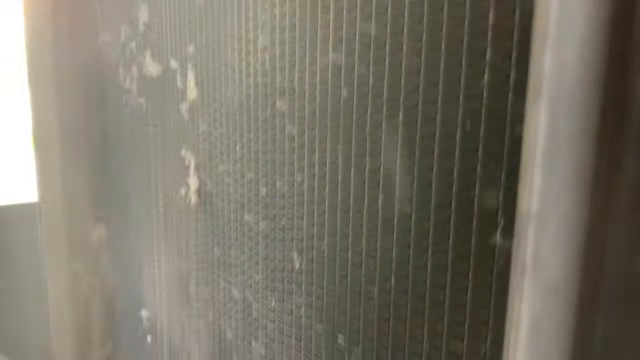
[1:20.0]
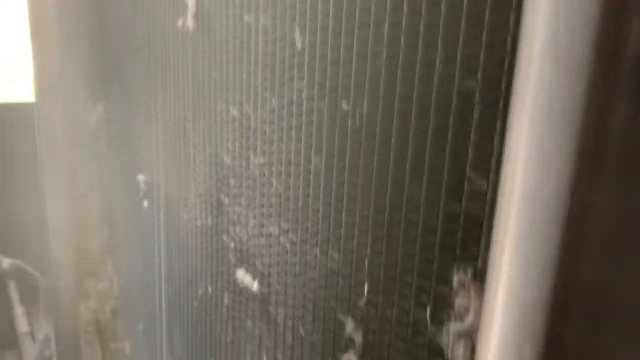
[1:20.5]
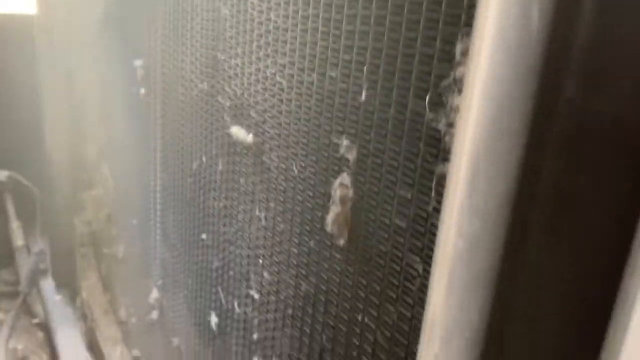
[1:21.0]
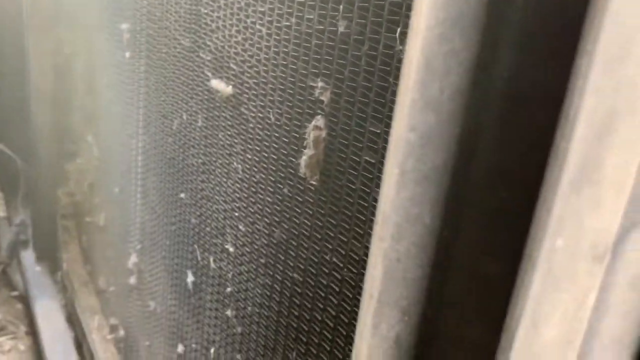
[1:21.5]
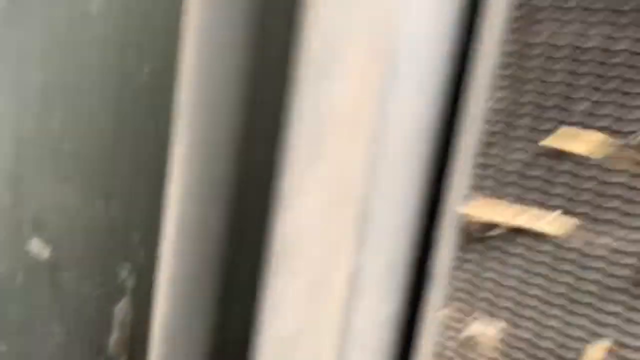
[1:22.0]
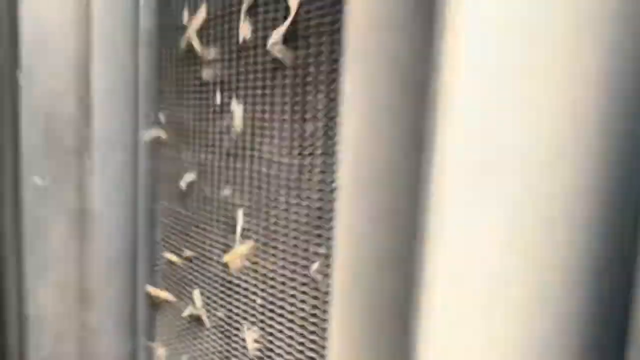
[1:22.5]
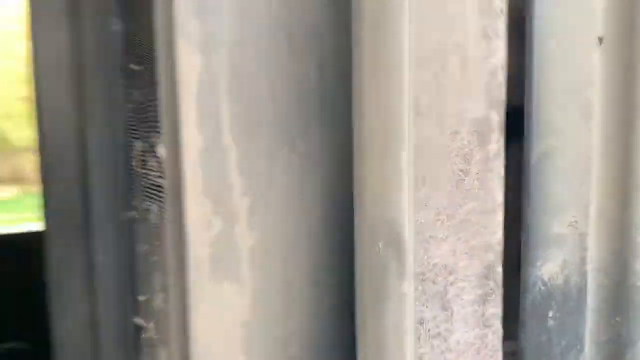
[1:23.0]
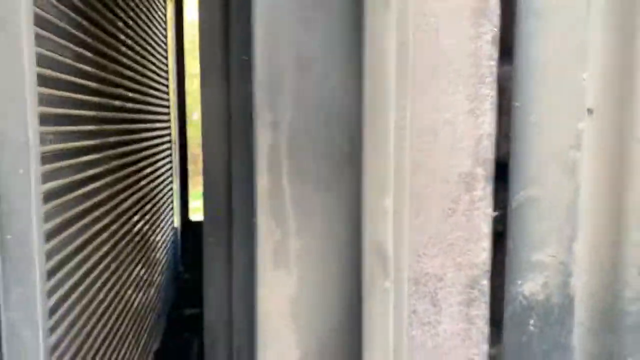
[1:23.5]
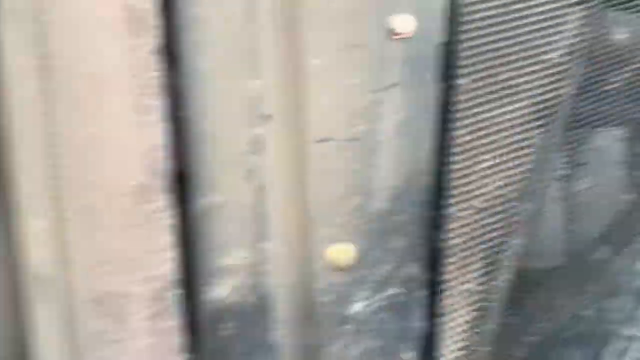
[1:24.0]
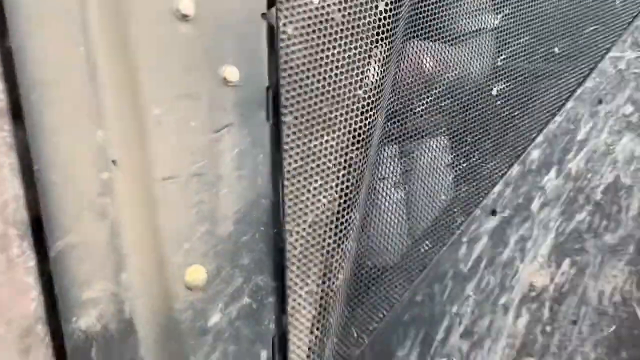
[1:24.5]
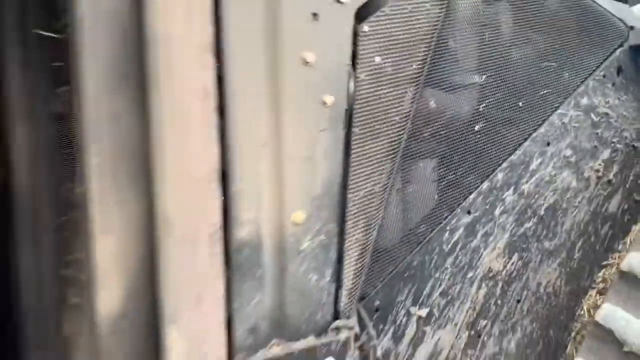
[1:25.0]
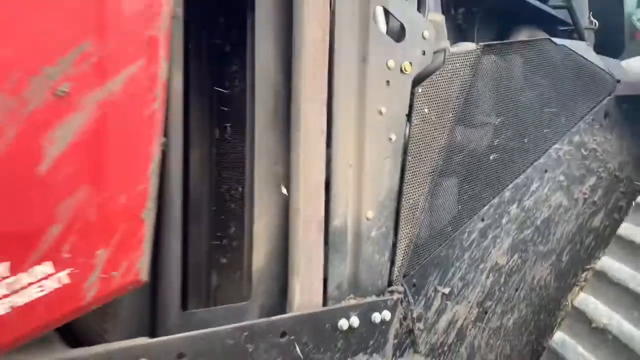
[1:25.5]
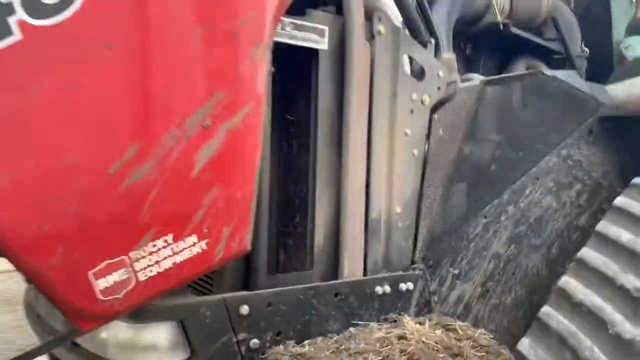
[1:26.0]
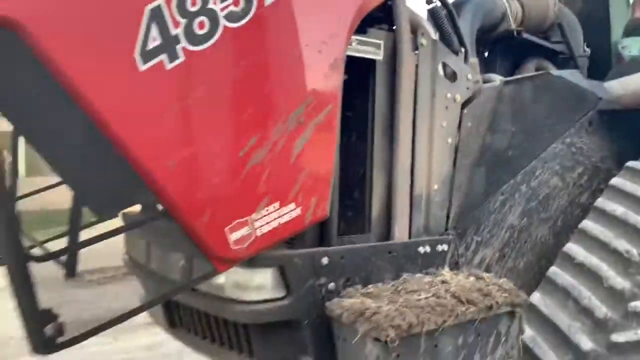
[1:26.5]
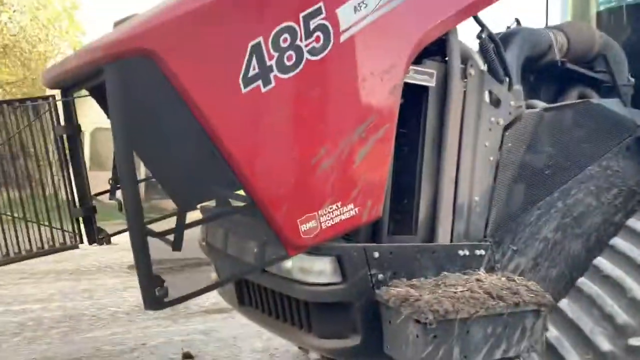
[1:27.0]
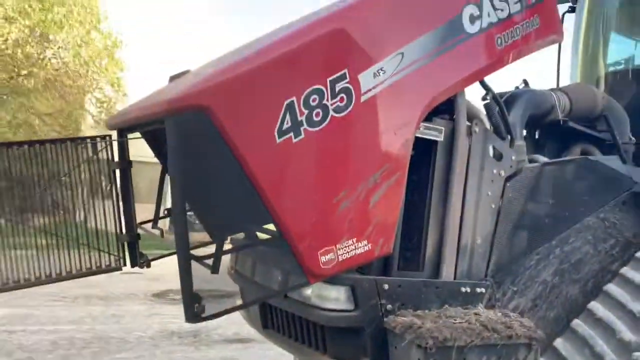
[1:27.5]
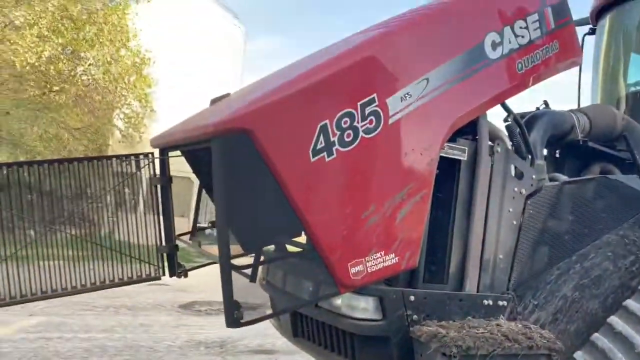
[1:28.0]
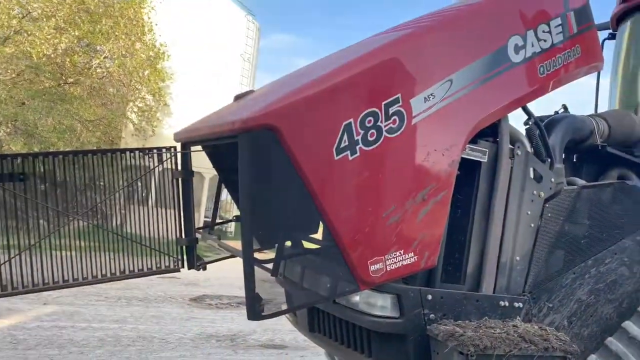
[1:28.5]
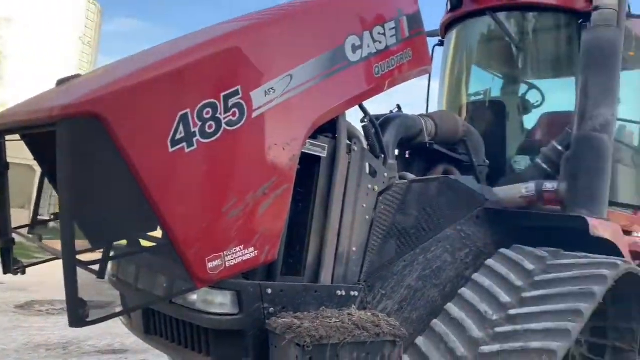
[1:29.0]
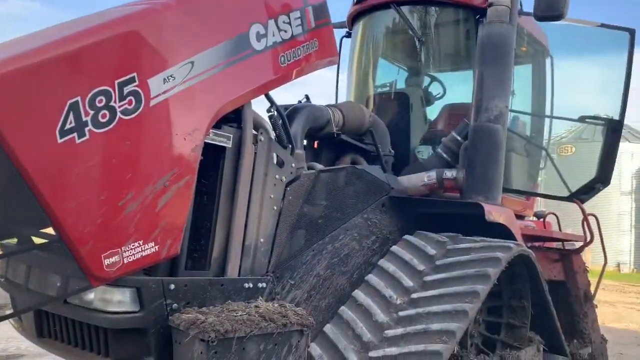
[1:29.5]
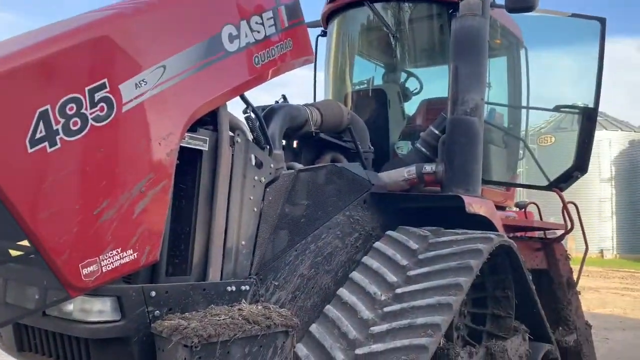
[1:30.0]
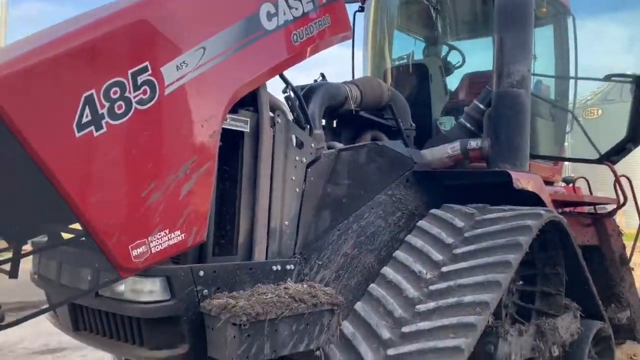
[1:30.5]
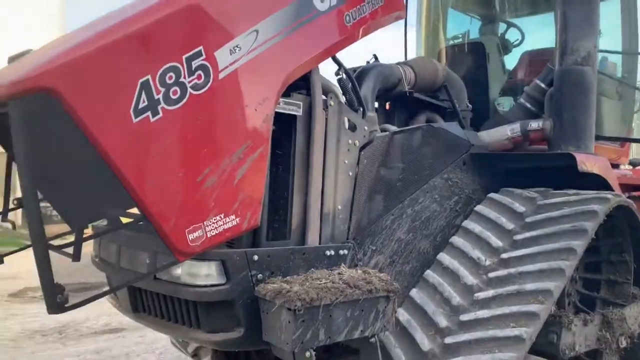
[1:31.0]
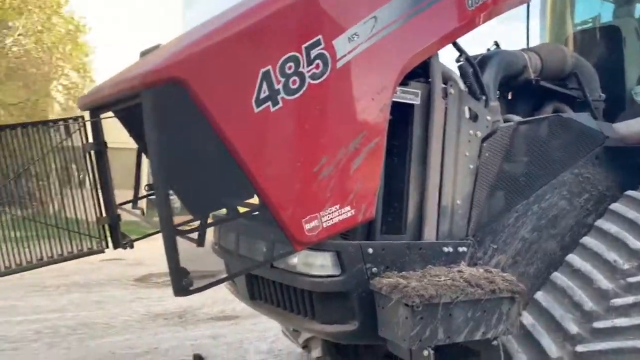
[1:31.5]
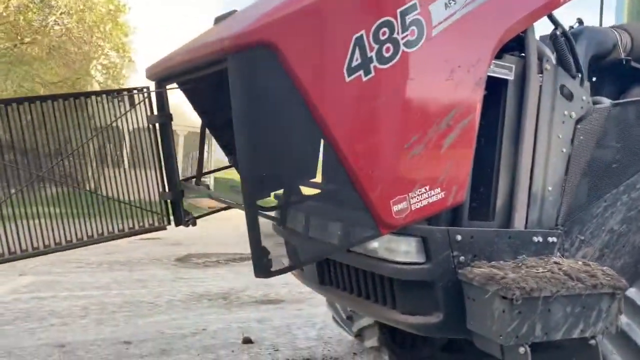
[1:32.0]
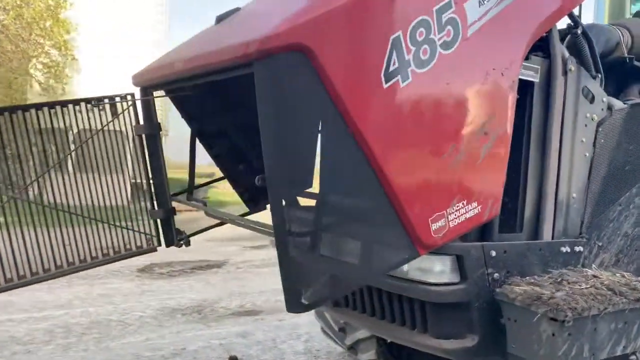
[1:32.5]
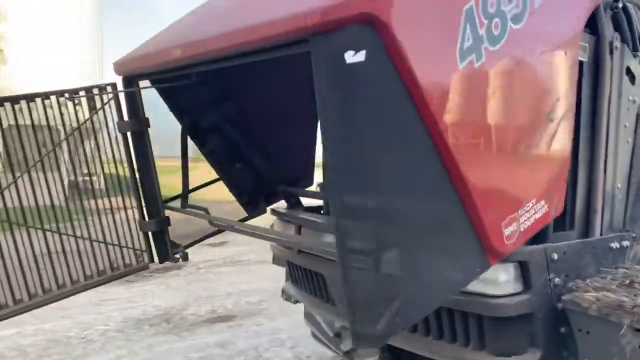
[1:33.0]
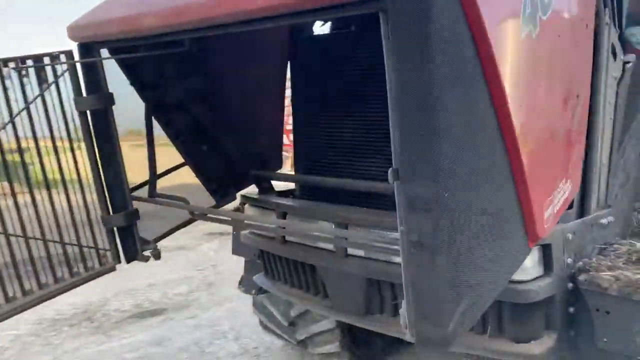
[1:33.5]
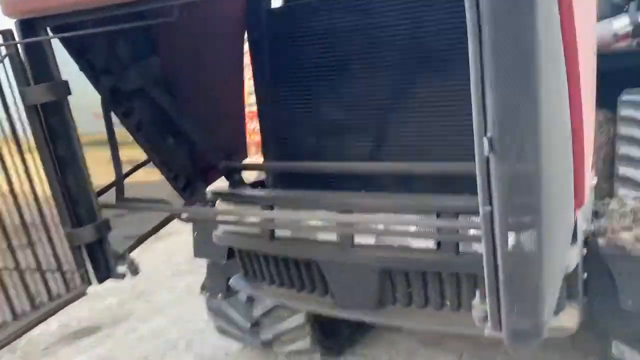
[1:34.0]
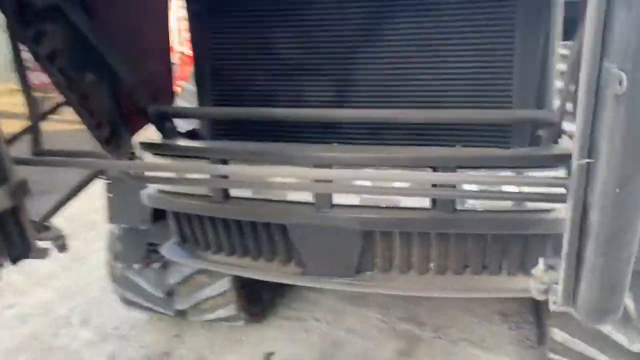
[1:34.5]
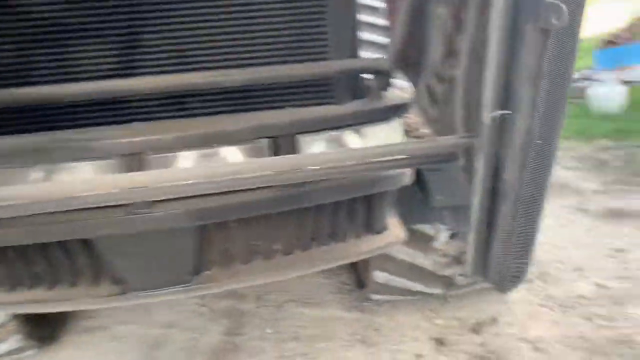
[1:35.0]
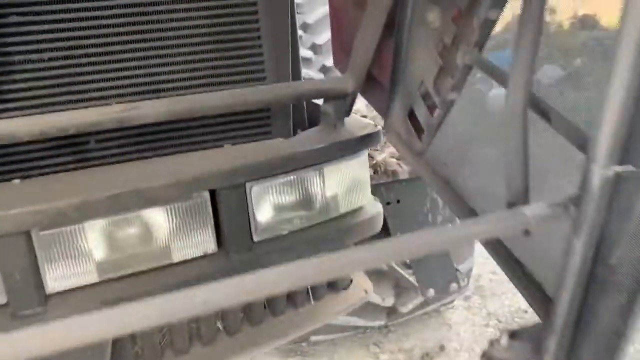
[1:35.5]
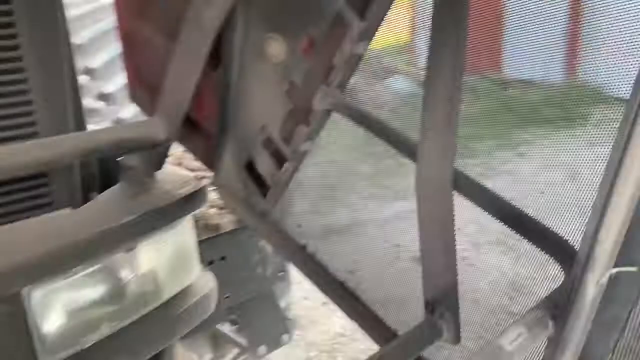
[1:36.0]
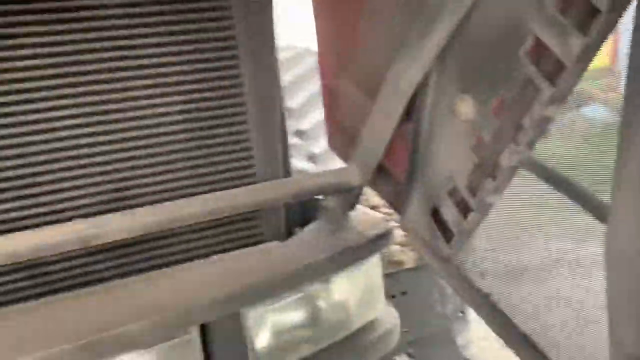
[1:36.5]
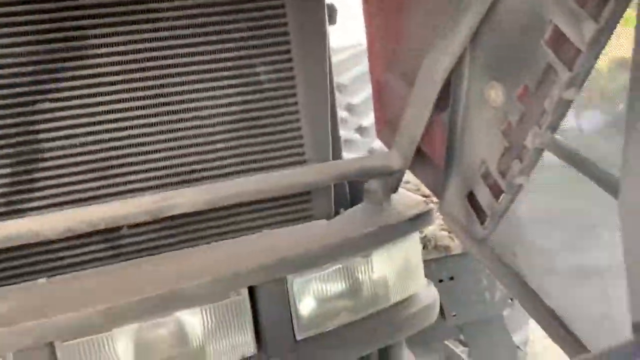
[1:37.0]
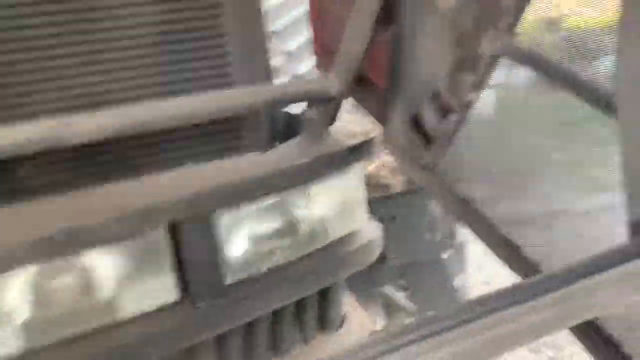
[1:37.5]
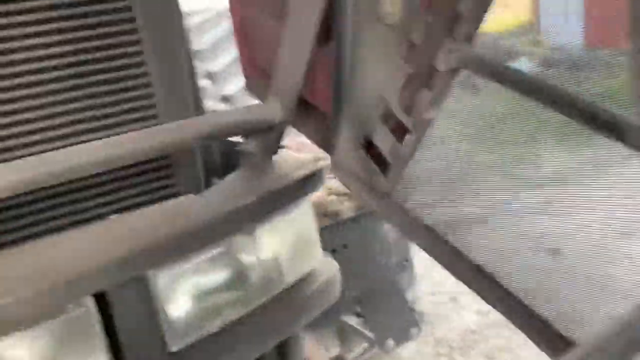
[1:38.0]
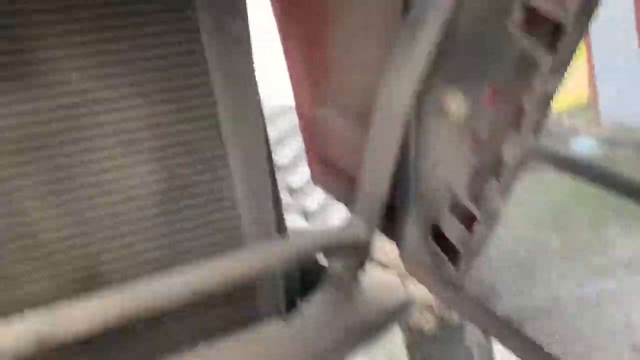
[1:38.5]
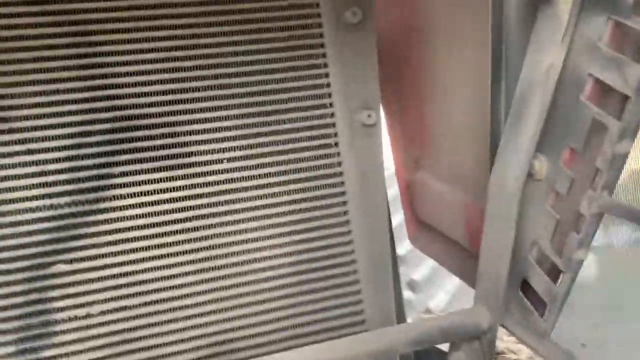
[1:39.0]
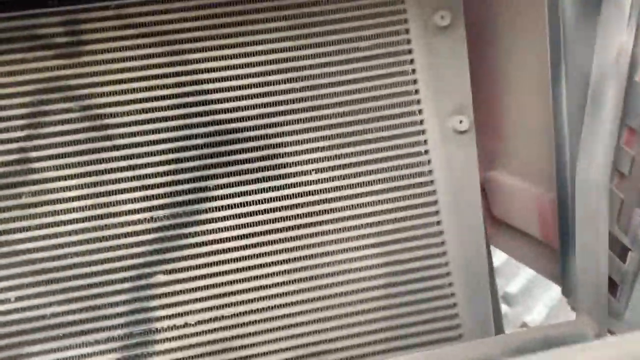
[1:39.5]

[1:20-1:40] The camera backs out, showing the propped-open front part of the tractor. The view goes to the right side, showing the control part of the tractor, with the steering wheel and a small compartment where the person sits. The camera then goes to the propped-open front of the tractor, showing a headlight. The person zooms out, walks backwards to view the left side of the outside of the tractor, then walks over to the front, where one of the headlights is visible. The part they are looking at looks like the radiator, with a lot of vertical lines, looking like some sort of black filter.